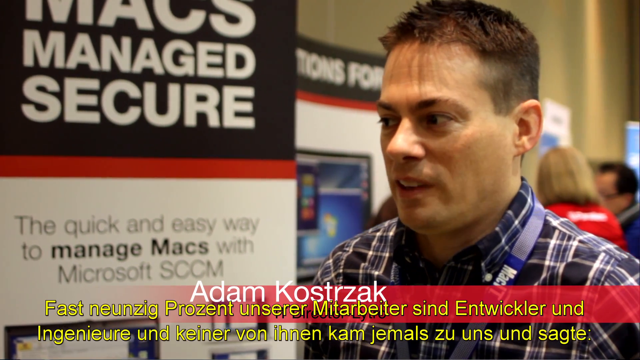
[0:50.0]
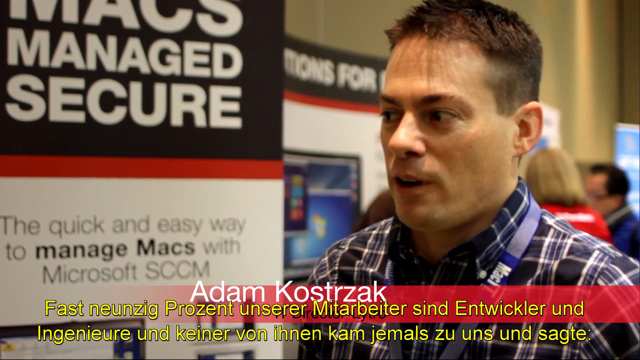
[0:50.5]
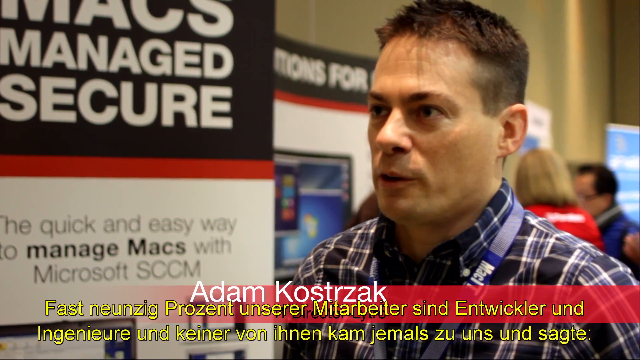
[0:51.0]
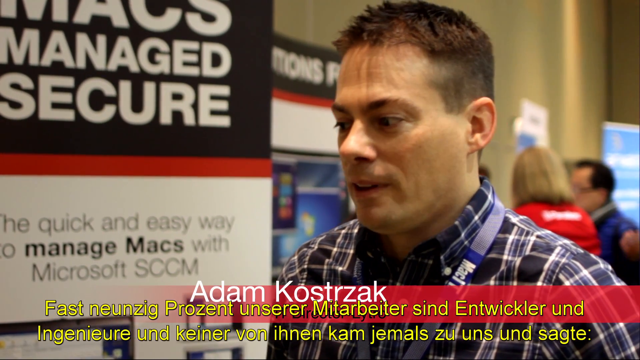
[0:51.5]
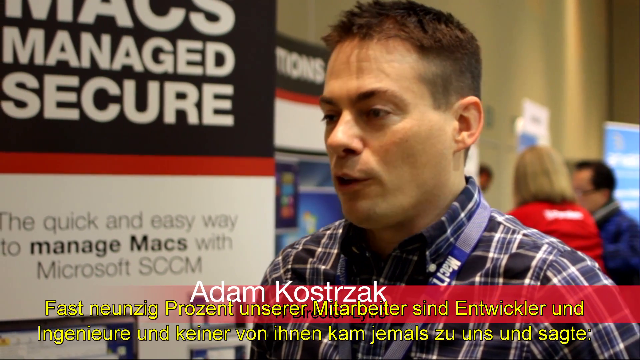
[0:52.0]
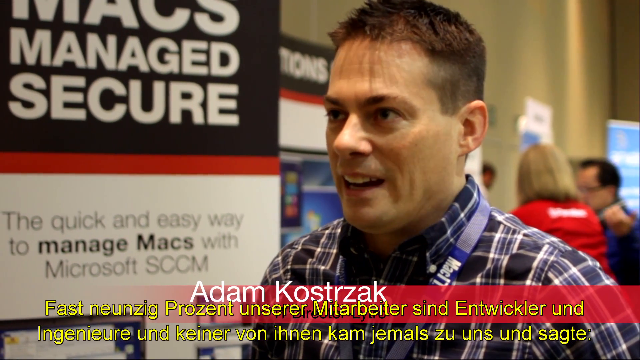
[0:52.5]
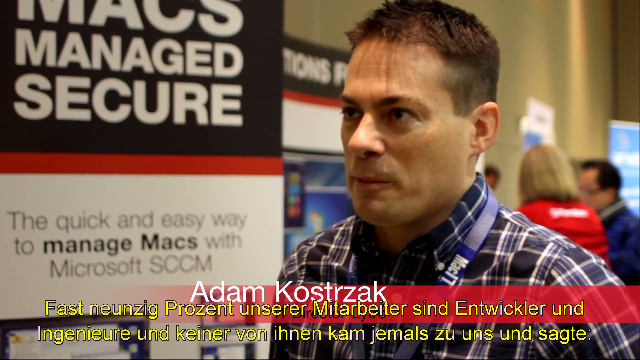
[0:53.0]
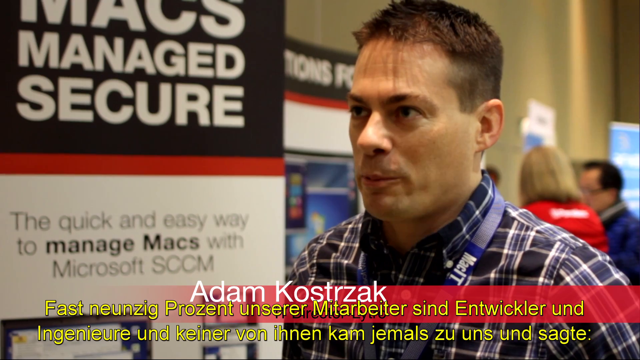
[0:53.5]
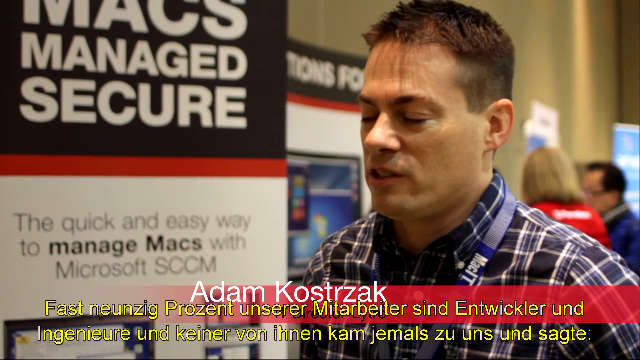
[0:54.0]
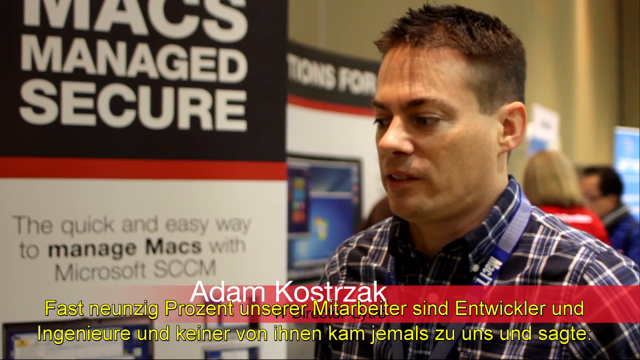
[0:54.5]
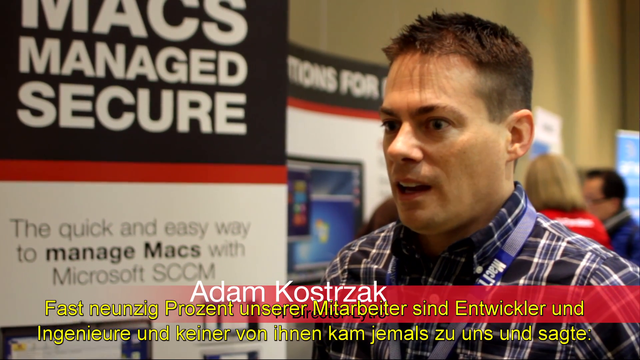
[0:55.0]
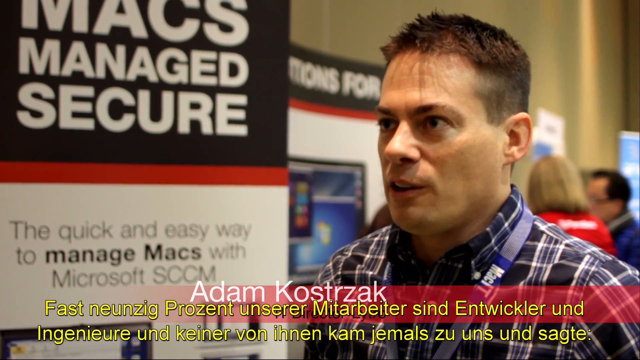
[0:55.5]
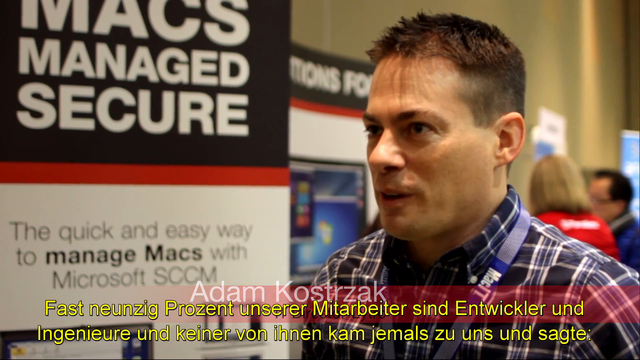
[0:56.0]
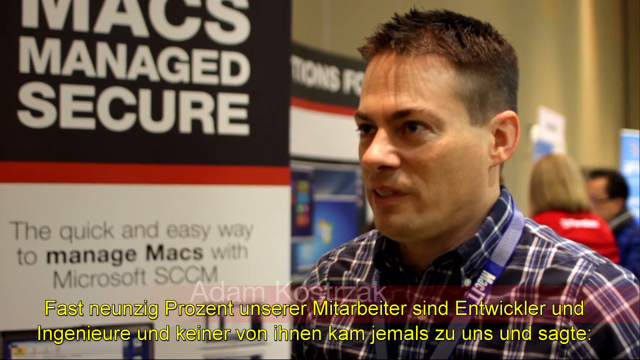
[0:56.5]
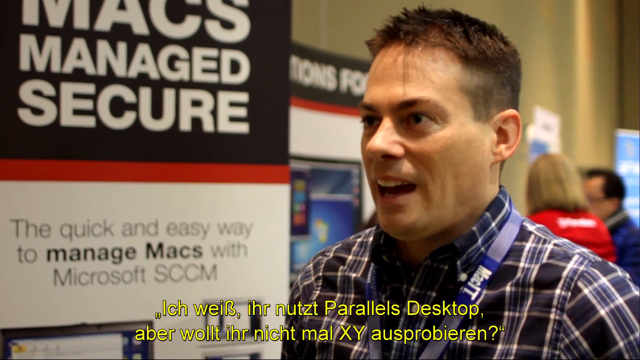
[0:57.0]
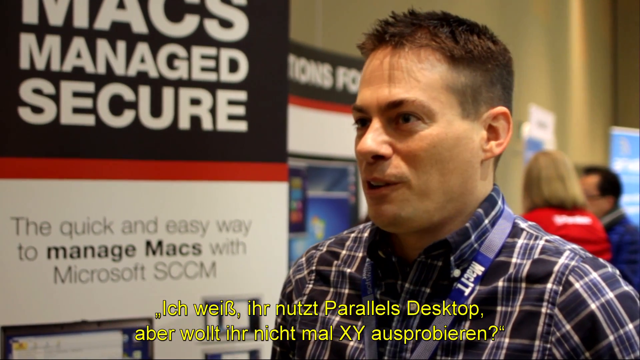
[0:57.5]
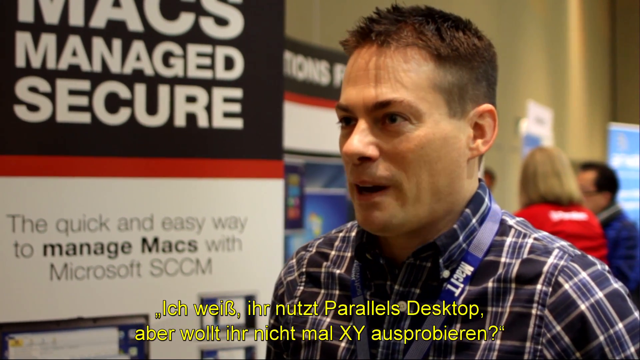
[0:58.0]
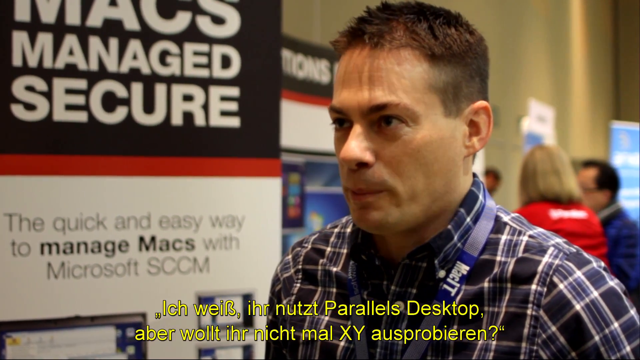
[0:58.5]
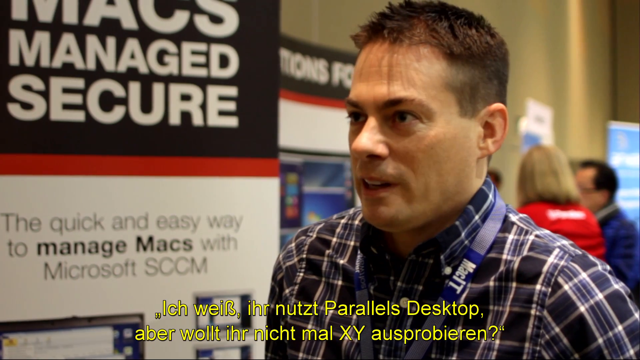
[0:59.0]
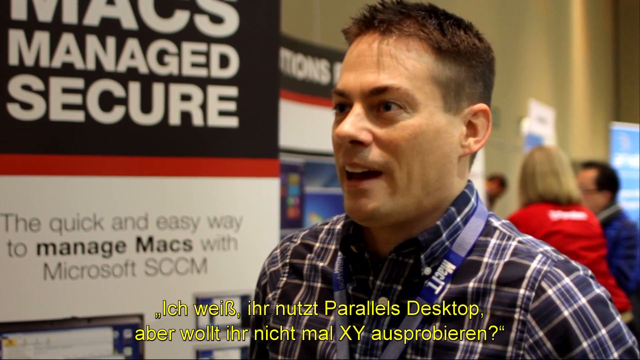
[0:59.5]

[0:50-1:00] Adam Kostrak speaks with German text underneath, apparently at a trade show. There are blurry panels and some people in the background. A woman in a red jacket with some white lettering on it, possibly staff, is talking to a man with black glasses. Over Adam's right shoulder is a blue window with a brown frame, maybe a screen. Nothing else is really happening.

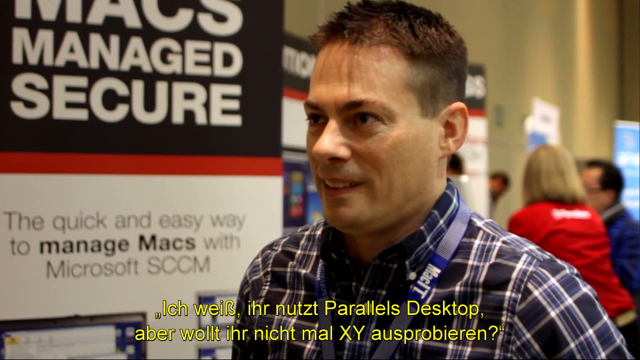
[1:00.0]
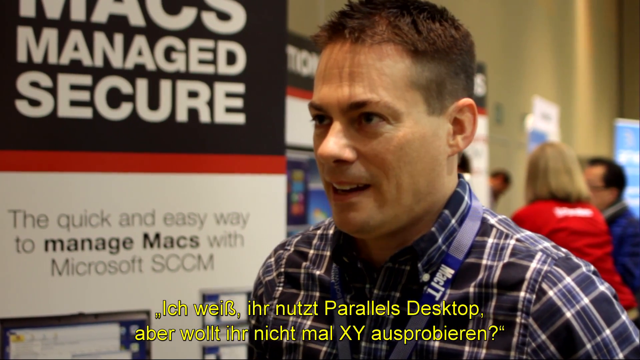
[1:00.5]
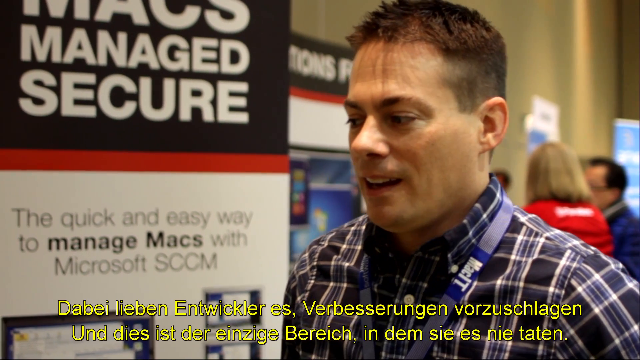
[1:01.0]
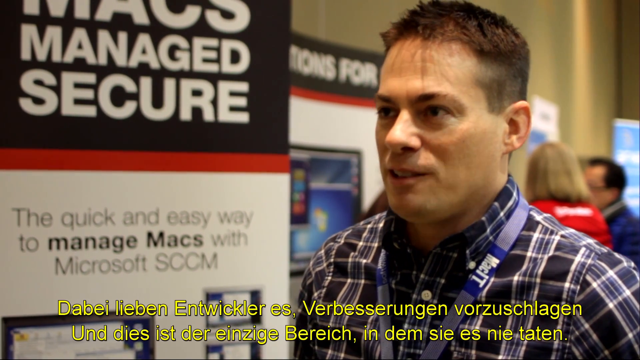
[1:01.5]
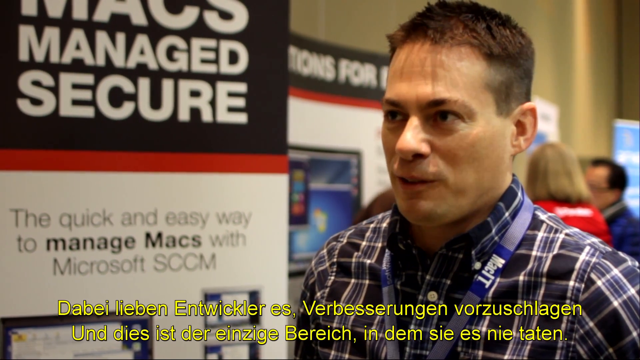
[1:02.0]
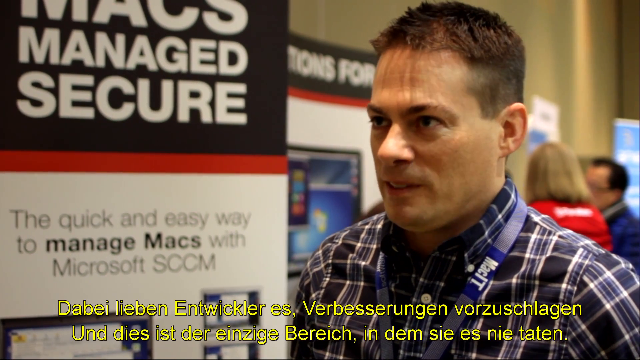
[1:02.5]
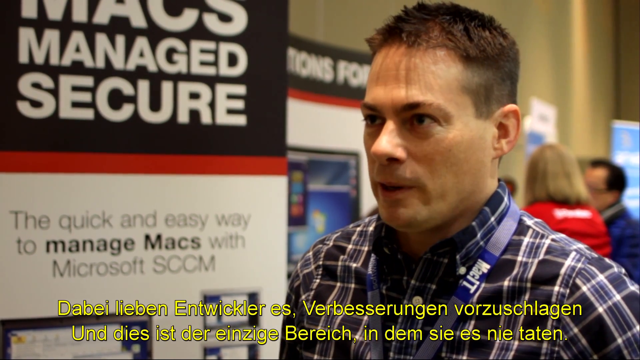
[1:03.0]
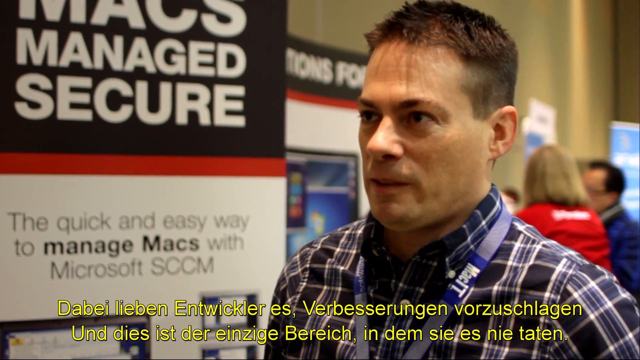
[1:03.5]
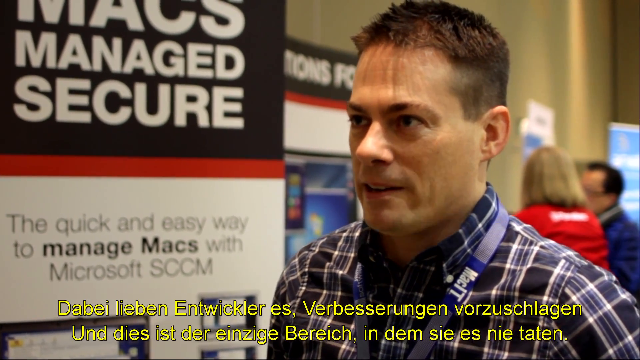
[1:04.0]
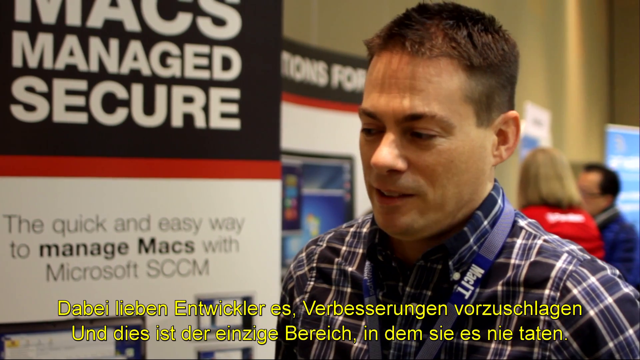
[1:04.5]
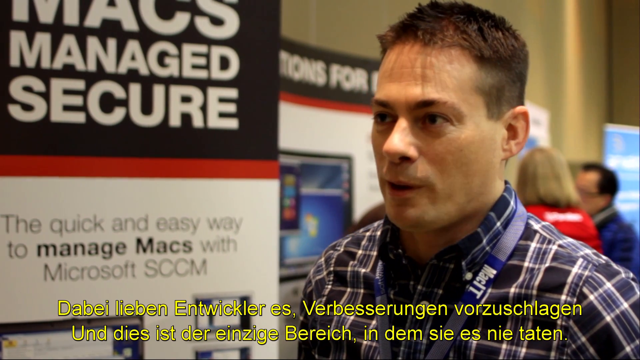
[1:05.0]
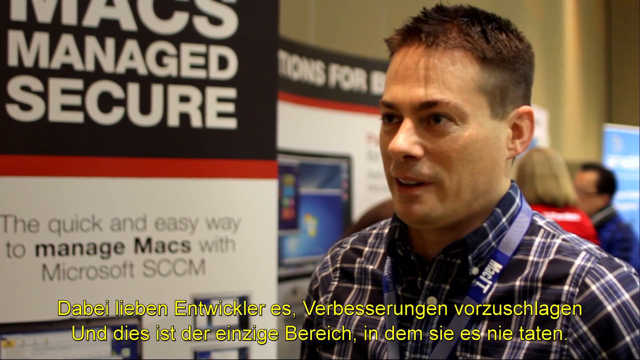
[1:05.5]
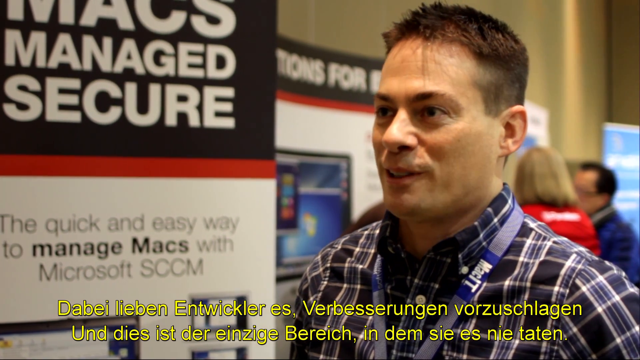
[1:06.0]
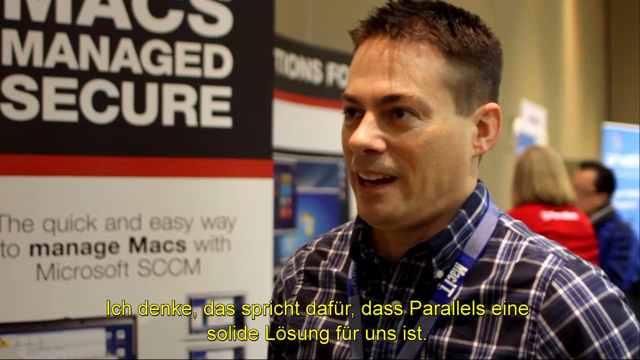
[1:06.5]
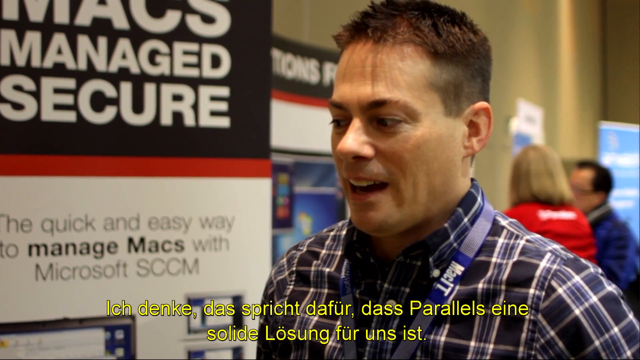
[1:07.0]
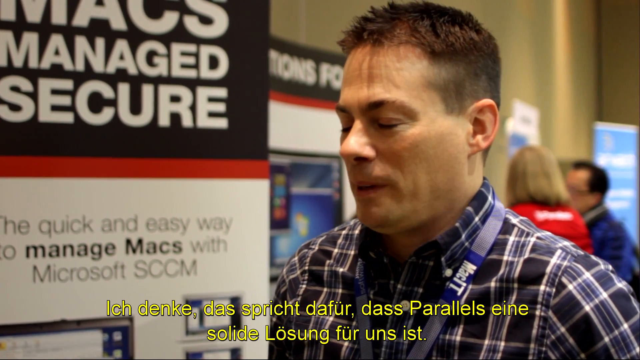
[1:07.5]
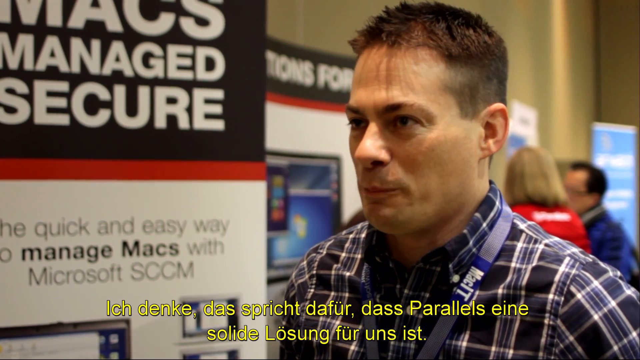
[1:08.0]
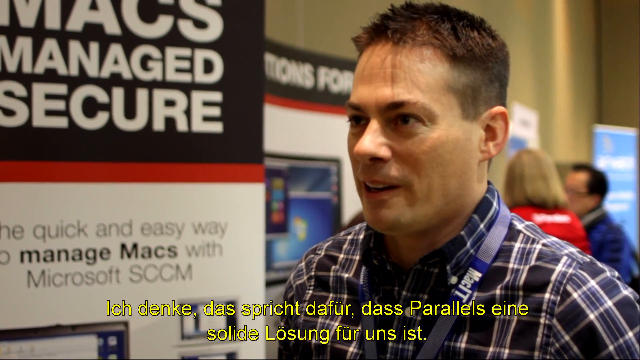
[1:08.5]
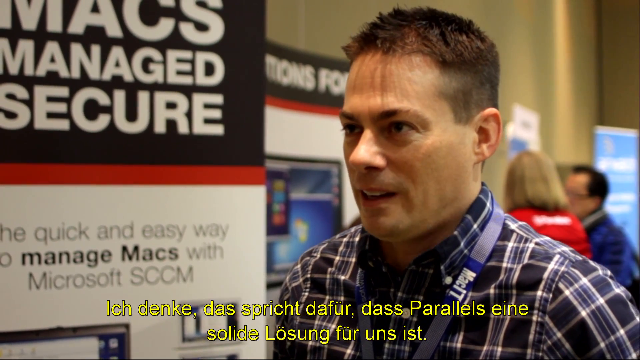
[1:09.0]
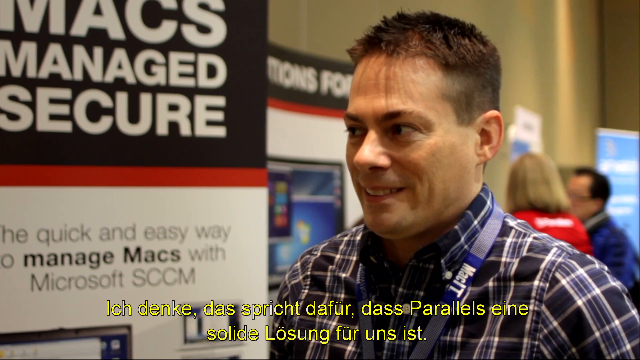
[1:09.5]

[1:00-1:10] The same man talks with German text underneath, with a little activity in the background. Far in the background, right over the man's left shoulder, someone ducks behind a table or something, apparently looking for something. His head comes out first, then the whole person comes out and bends down to pick up something. The main speaker then moves so the background cannot be seen. This is the only motion apart from the main speaker.